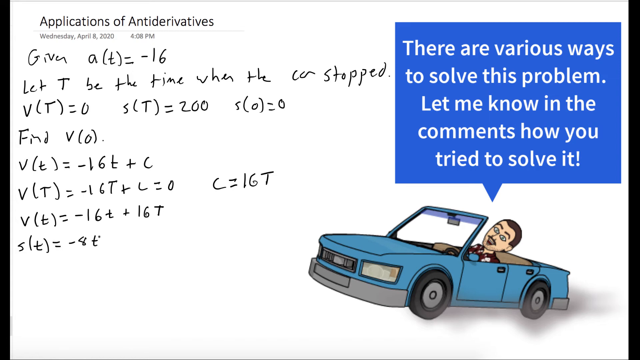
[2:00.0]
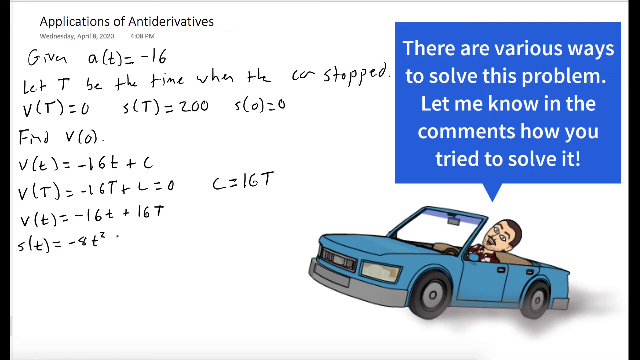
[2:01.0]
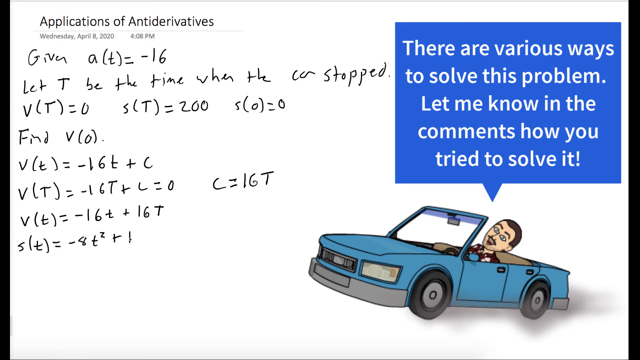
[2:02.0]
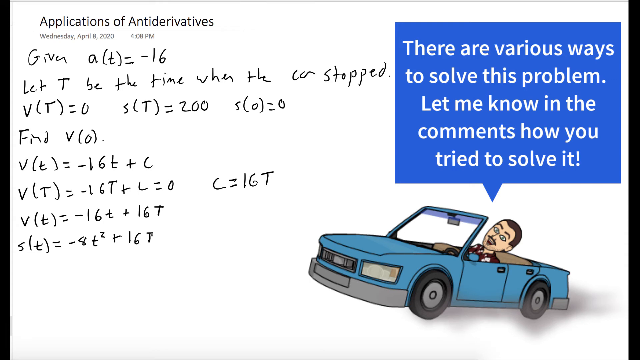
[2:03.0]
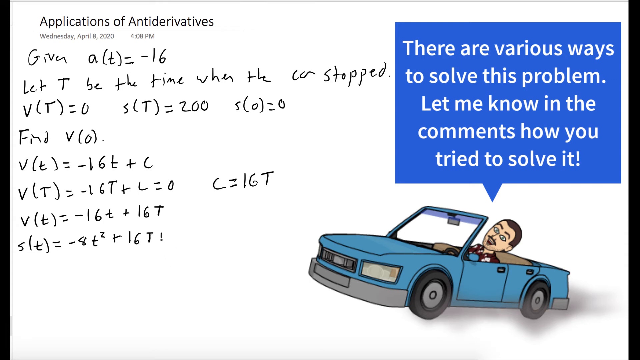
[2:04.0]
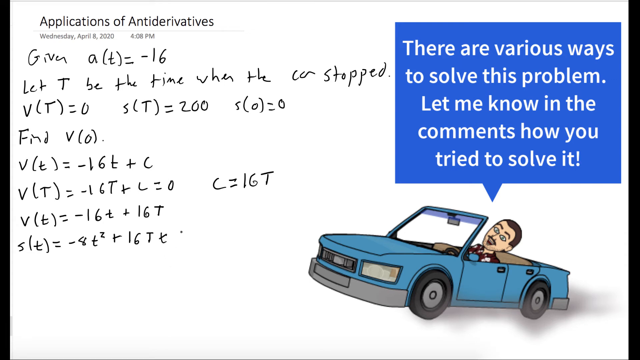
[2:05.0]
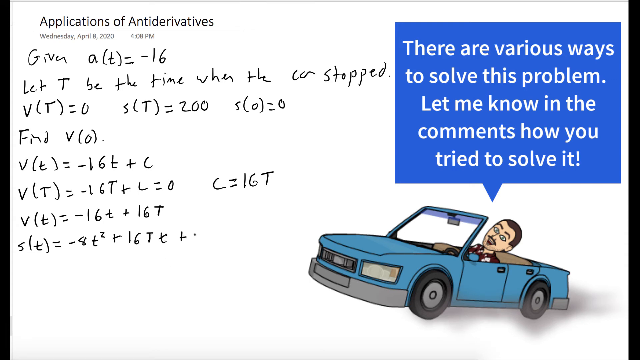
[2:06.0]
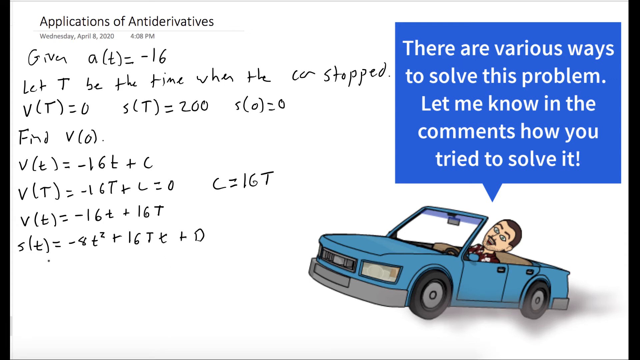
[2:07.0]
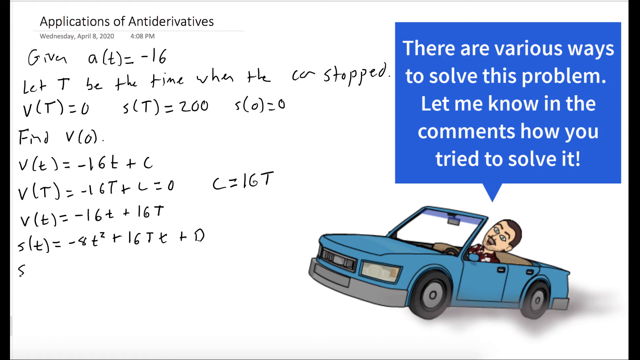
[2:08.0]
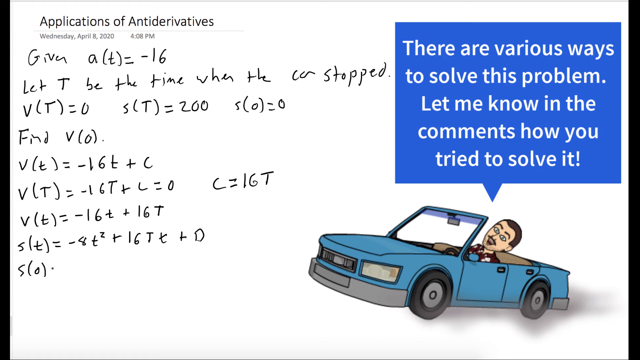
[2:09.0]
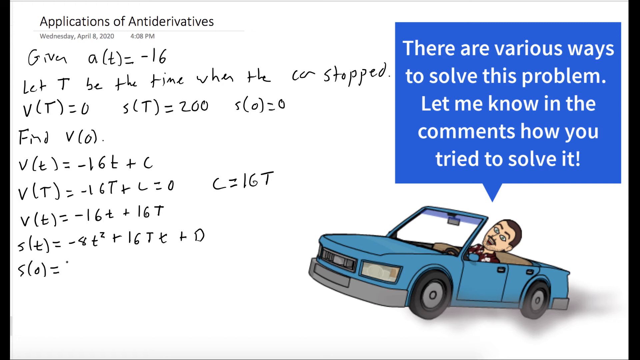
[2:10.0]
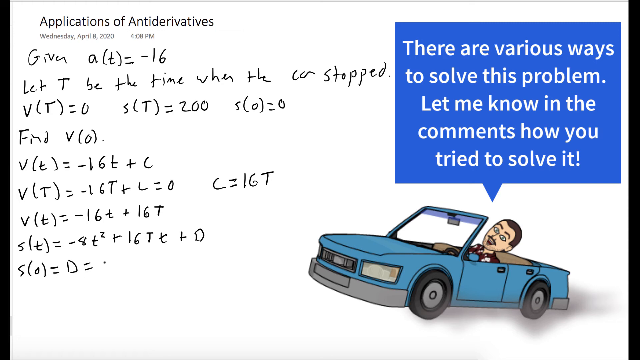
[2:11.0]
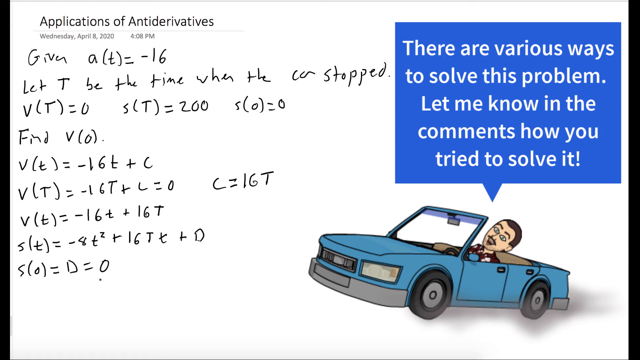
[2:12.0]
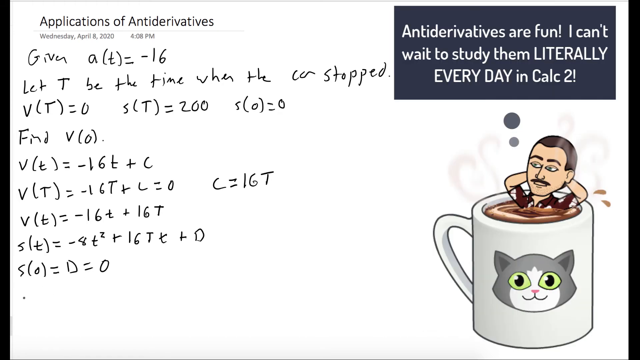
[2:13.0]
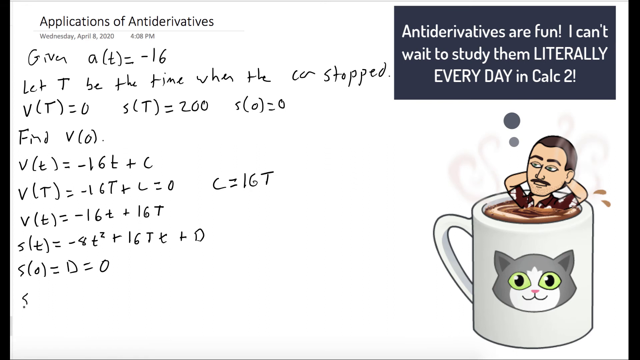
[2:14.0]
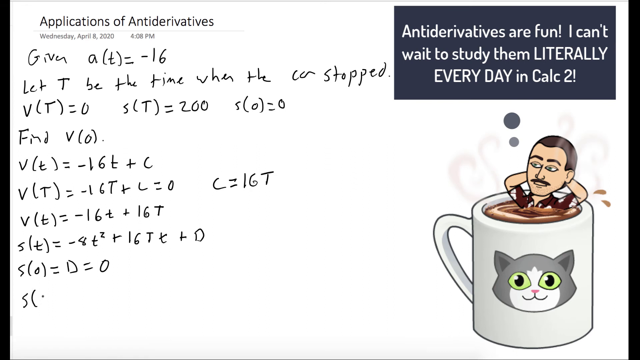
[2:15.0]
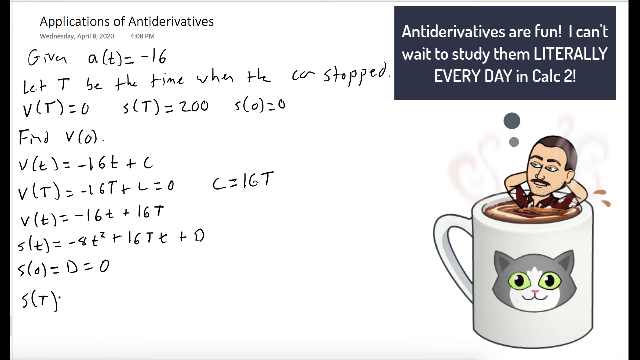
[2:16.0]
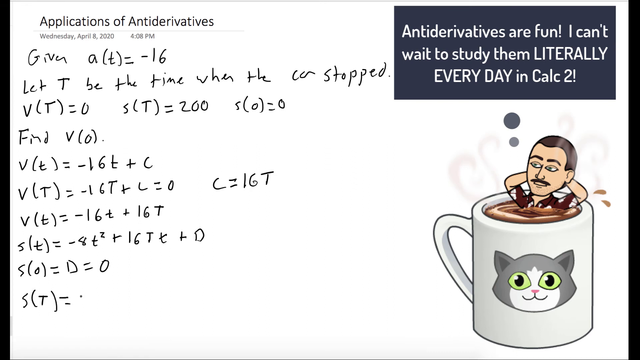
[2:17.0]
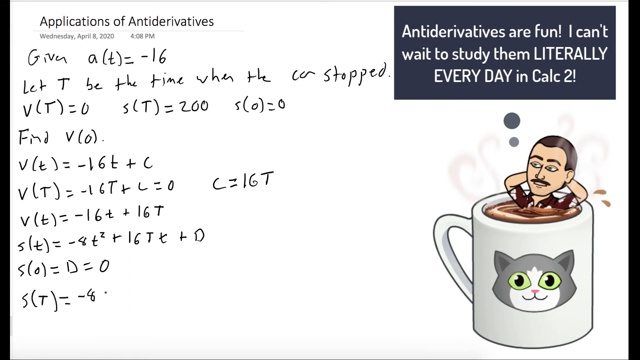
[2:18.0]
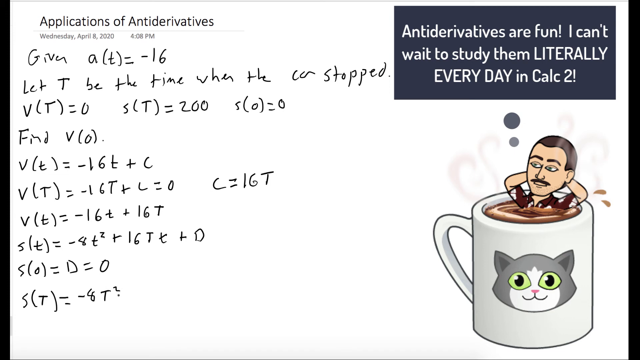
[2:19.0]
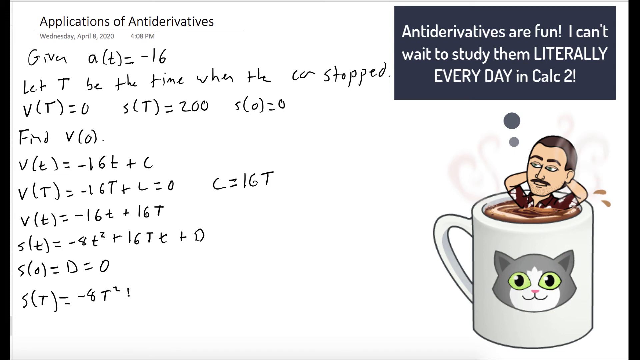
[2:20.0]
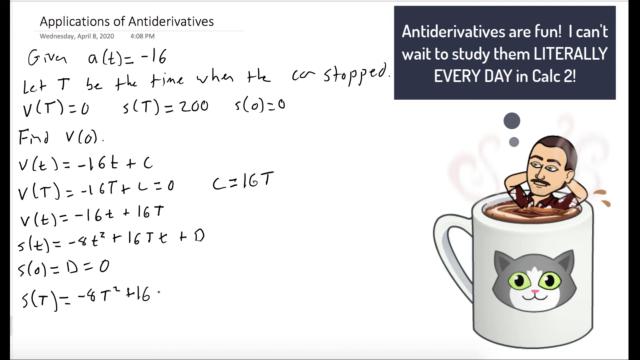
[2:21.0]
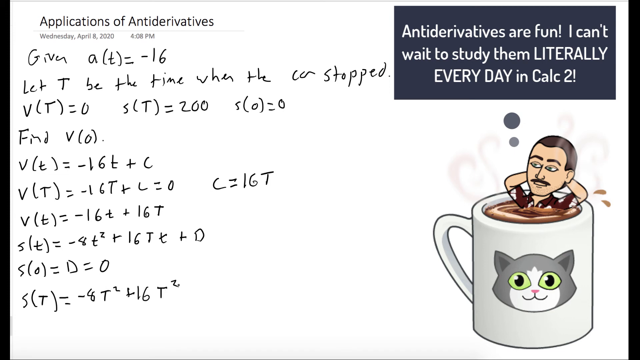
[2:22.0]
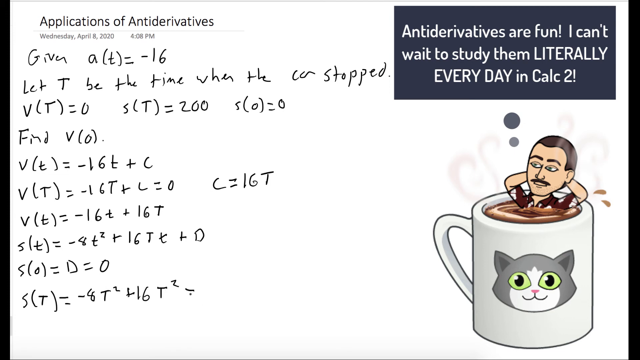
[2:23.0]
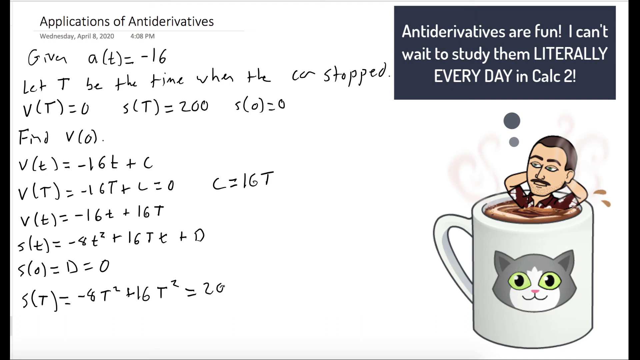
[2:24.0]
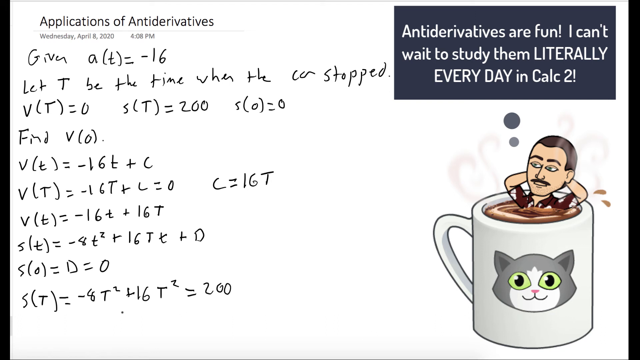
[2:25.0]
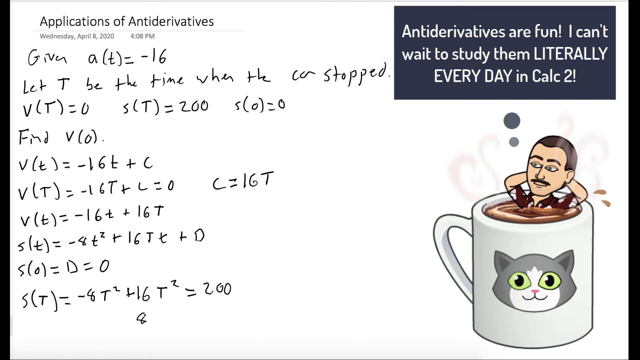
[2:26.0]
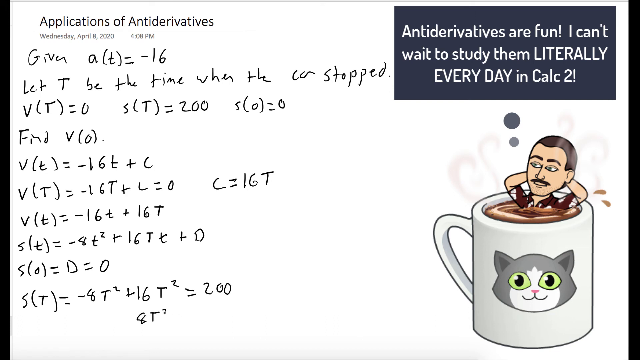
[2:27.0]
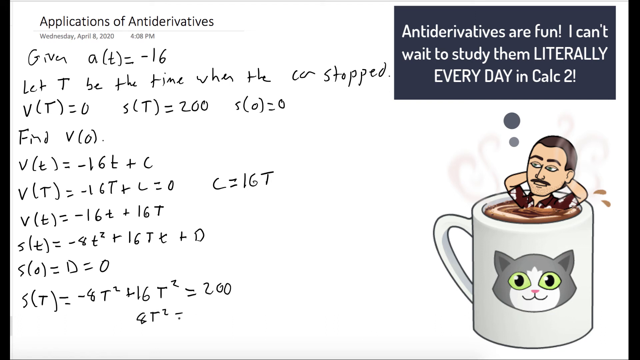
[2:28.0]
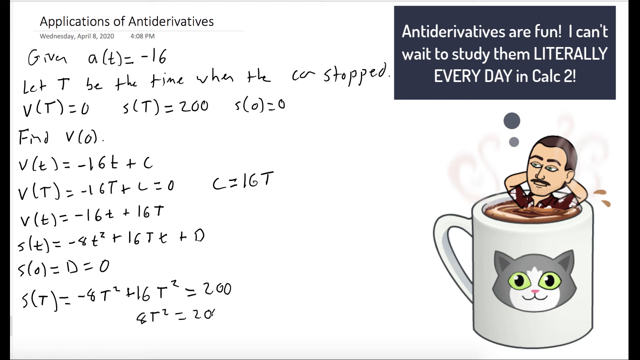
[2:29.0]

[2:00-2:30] The cursor continues to write out the mathematical problem on the left side of the screen. The added writing says "ST equals minus 8T squared plus 16TX plus D. S0 equals D equals 0." The illustration on the right side then changes: the same man in the Hawaiian shirt is seated inside a mug of coffee with both hands behind his head in a relaxed manner. To his right a couple of drops of coffee spill out of the mug, and in the background light grey curls seem to represent steam. The face of a grey cat with green eyes is on the mug. A thought bubble above the man's head has a grey background and white text that says "anti-derivatives are fun. I can't wait to study them literally every day in Calc 2." The cursive text on the left continues: "ST equals minus 8T squared plus 16T squared equals 200. 8T squared equals 200."